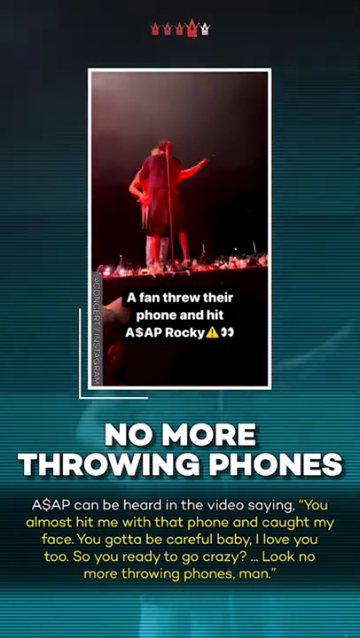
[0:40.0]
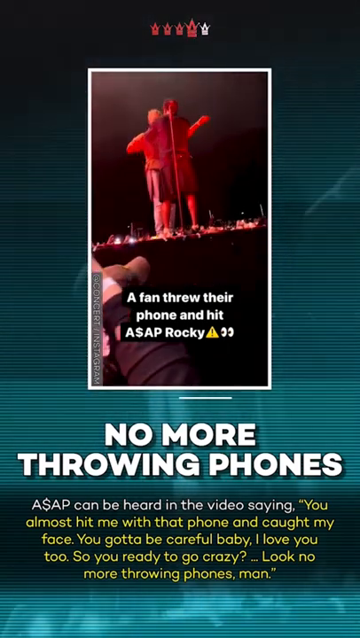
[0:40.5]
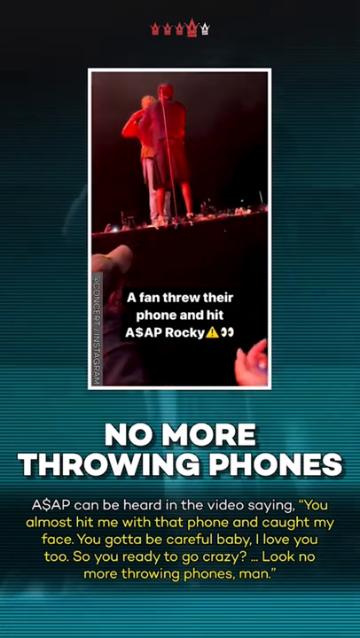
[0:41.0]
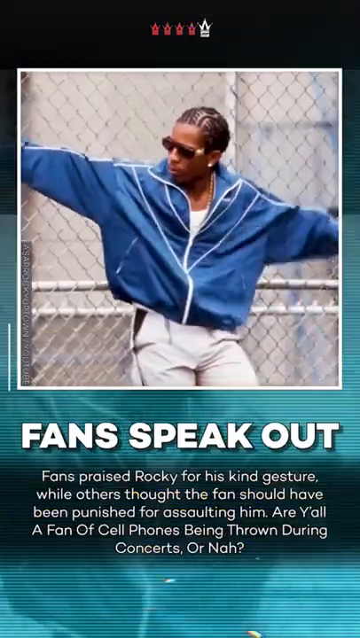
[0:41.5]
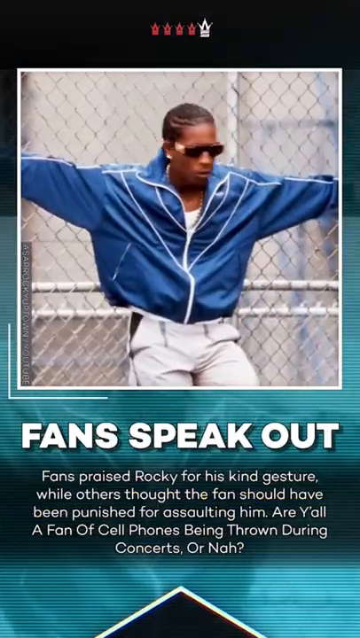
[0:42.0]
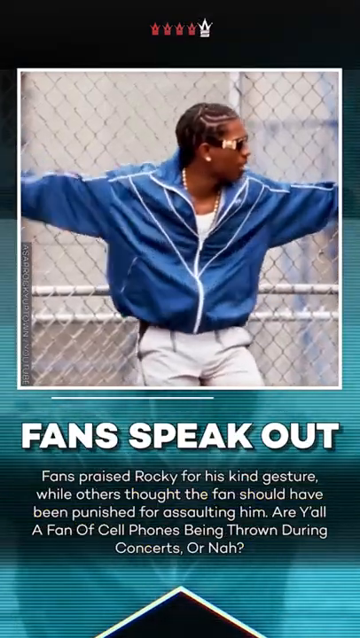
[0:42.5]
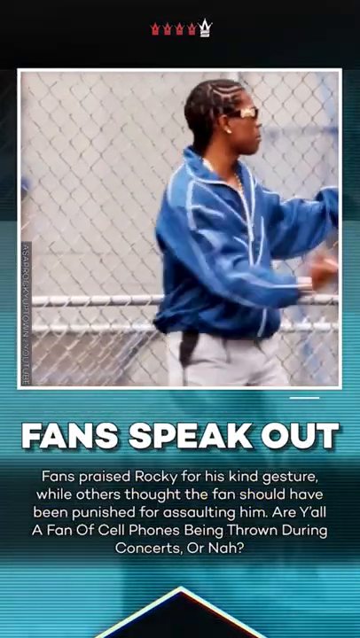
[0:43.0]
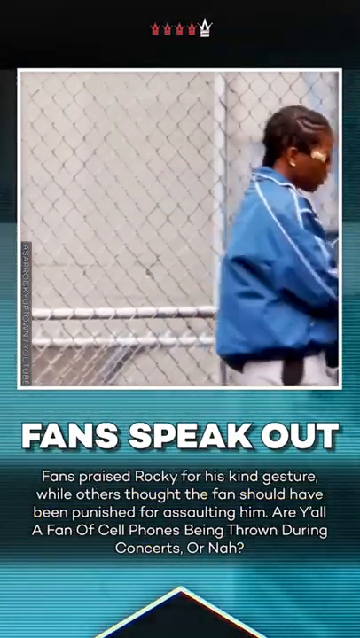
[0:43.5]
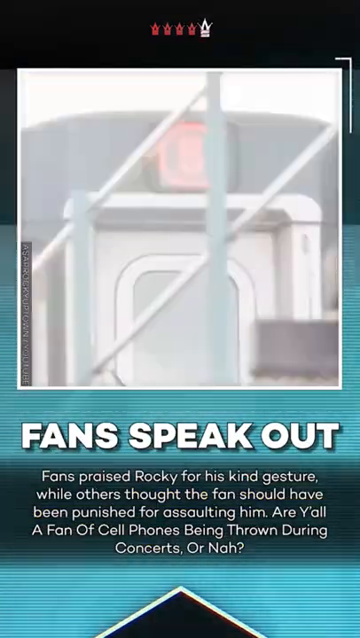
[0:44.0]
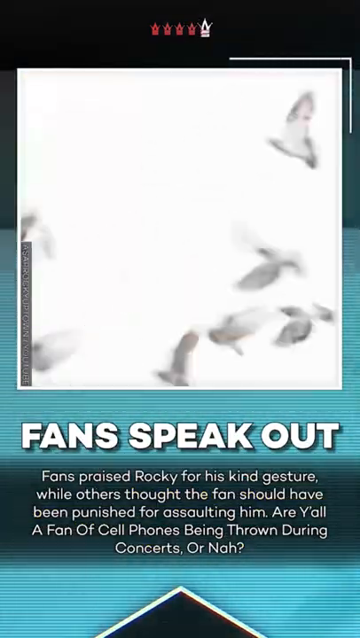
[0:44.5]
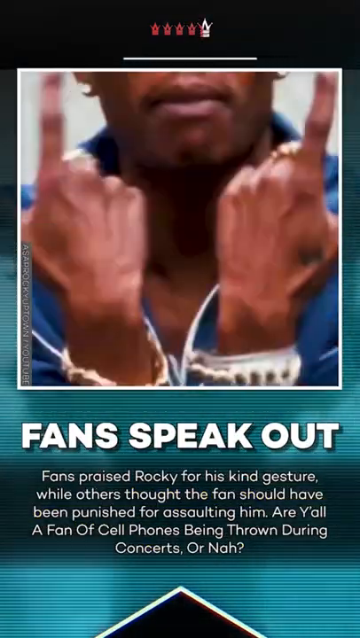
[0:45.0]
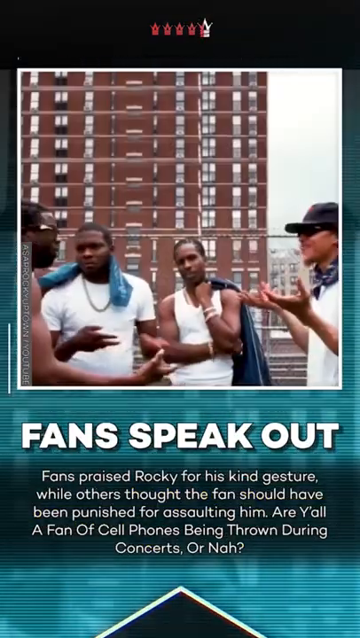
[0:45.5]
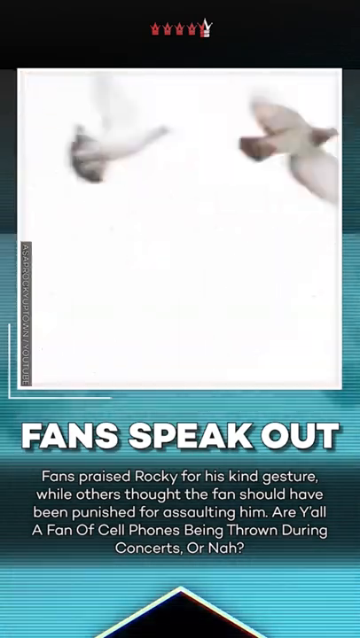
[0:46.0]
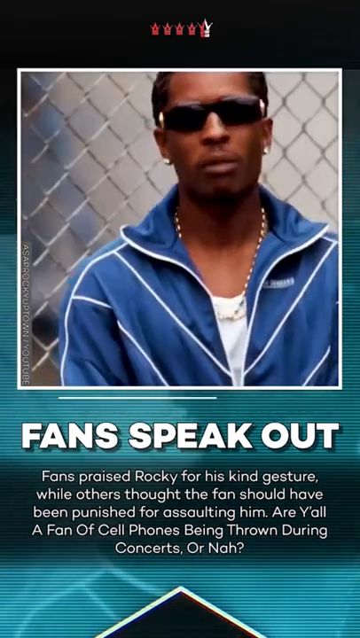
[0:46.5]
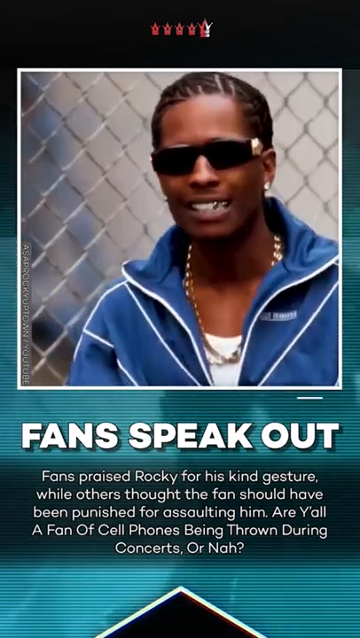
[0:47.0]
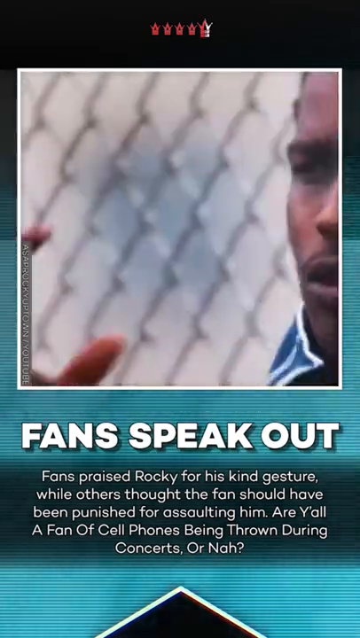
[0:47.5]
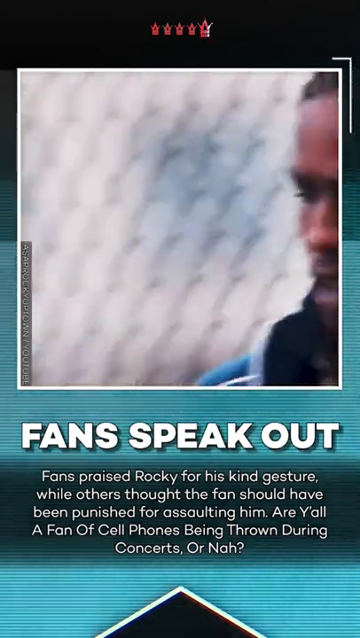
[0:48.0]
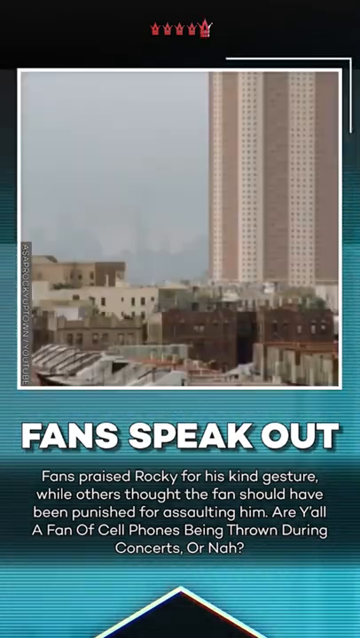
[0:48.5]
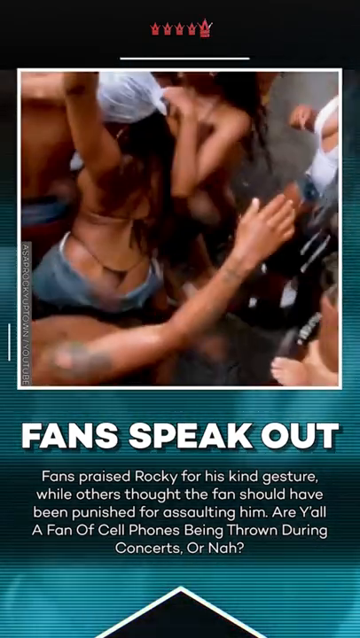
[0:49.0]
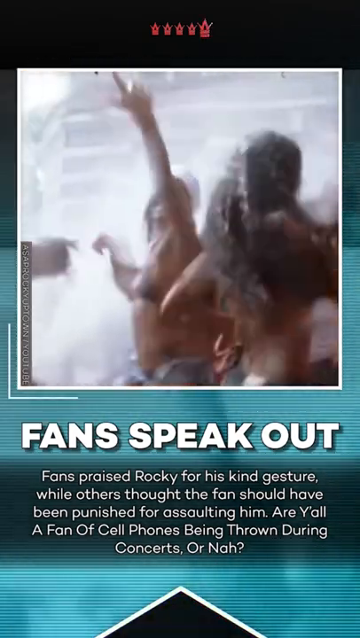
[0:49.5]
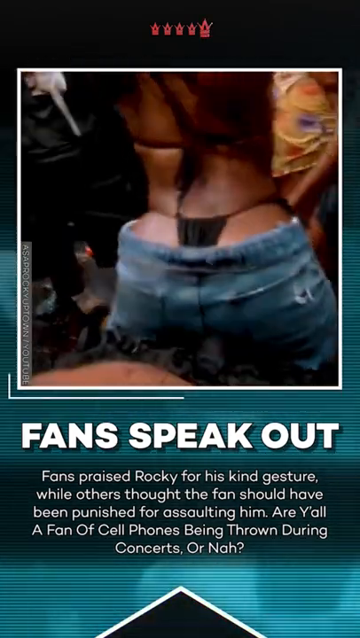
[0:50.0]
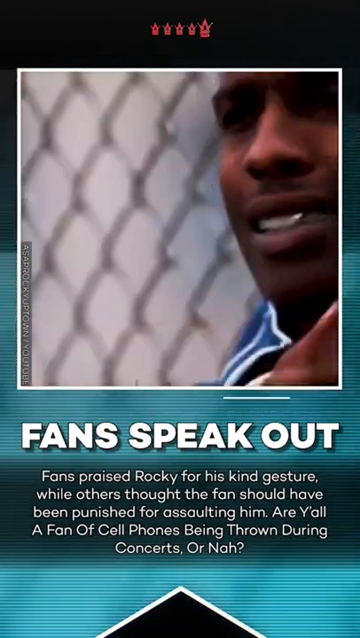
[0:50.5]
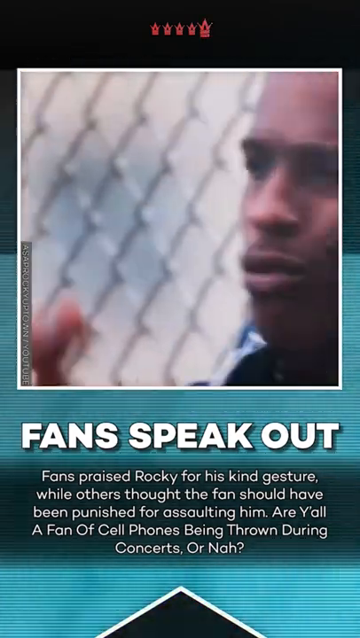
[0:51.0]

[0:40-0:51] The article concludes with fans speaking out after the incident, praising A$AP Rocky for his kind gesture of inviting the fan on stage and warning him not to do it again, rather than handling it negatively, since the fan could have been punished for throwing the phone at him. The article poses the question of whether people are a fan of throwing cell phones.